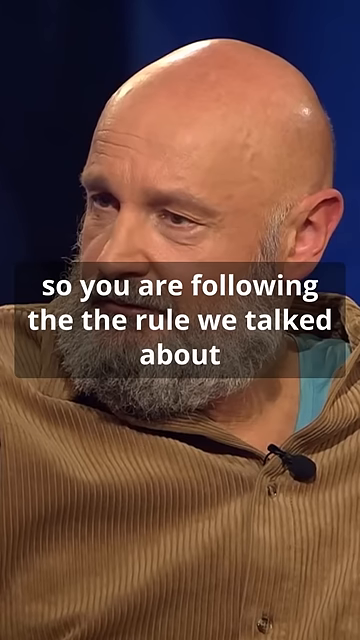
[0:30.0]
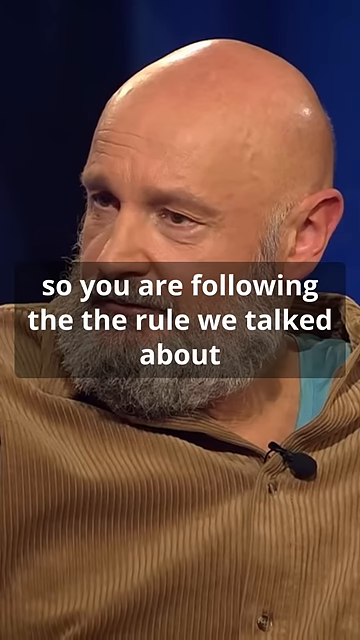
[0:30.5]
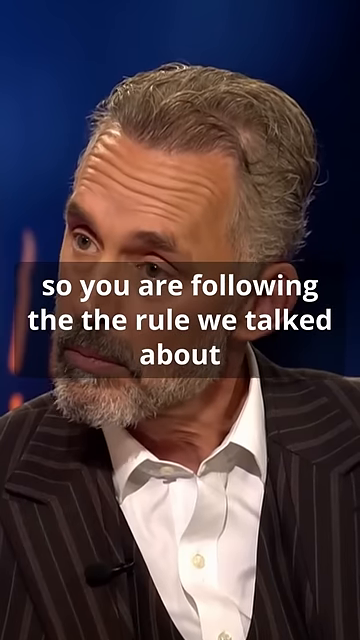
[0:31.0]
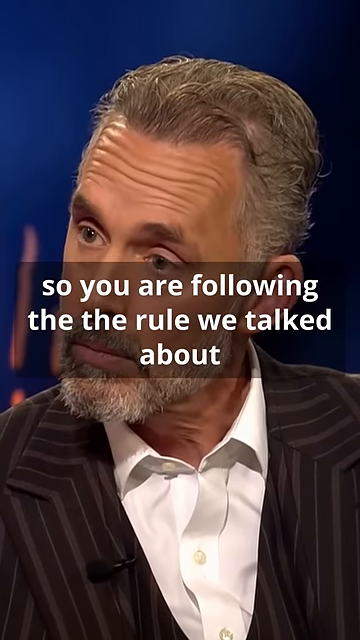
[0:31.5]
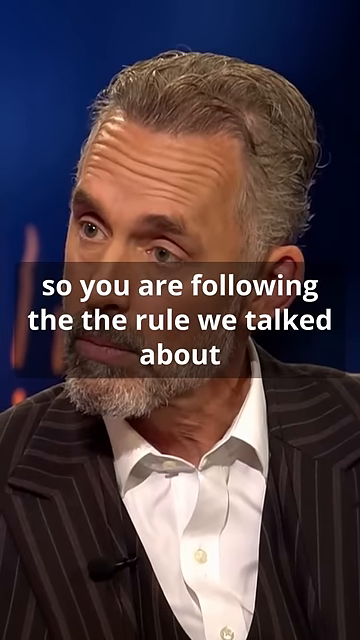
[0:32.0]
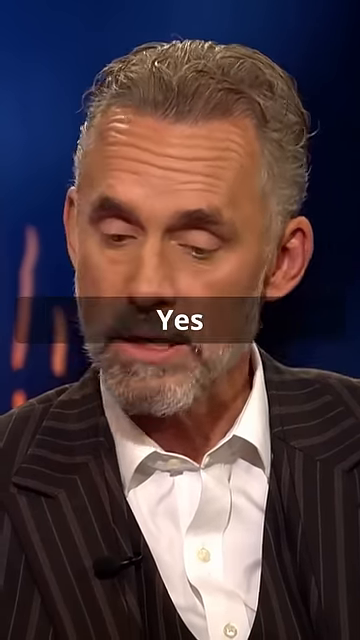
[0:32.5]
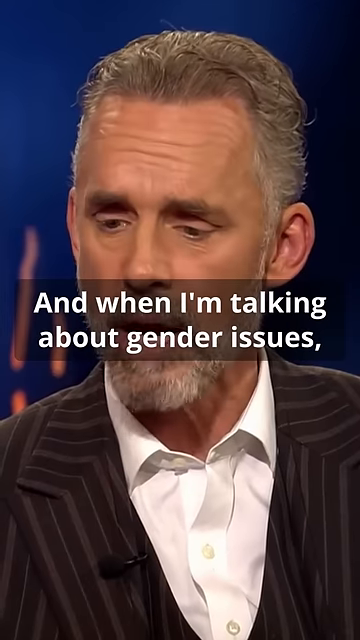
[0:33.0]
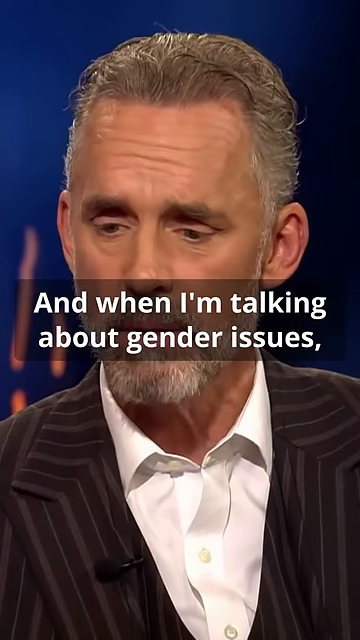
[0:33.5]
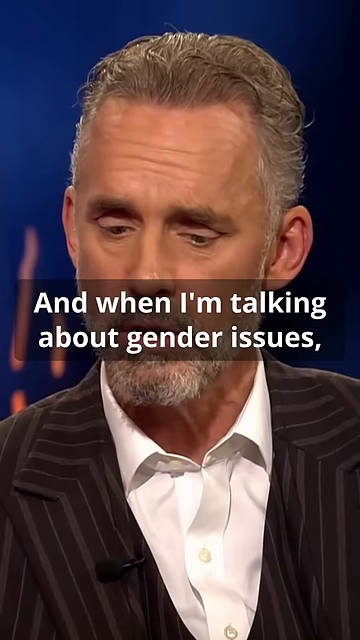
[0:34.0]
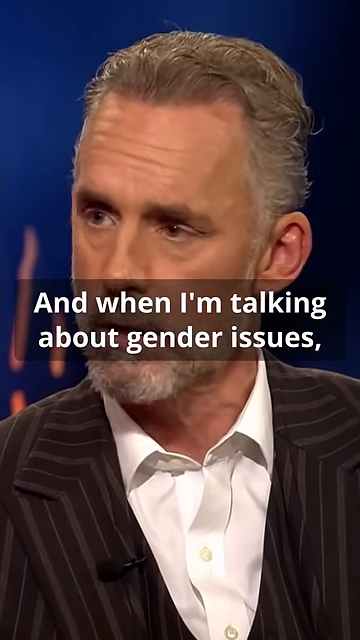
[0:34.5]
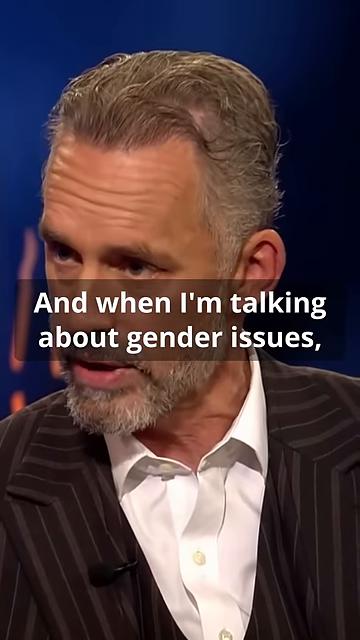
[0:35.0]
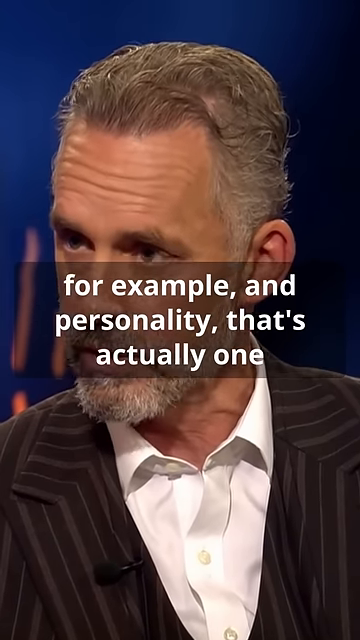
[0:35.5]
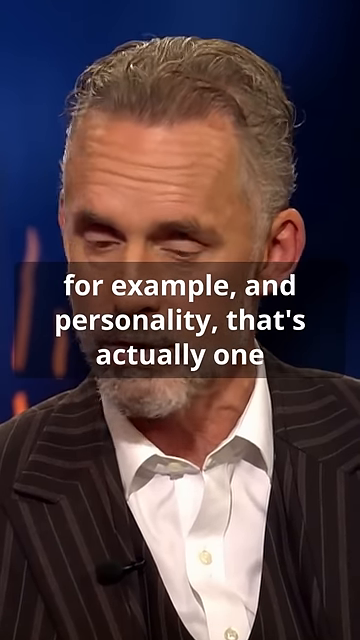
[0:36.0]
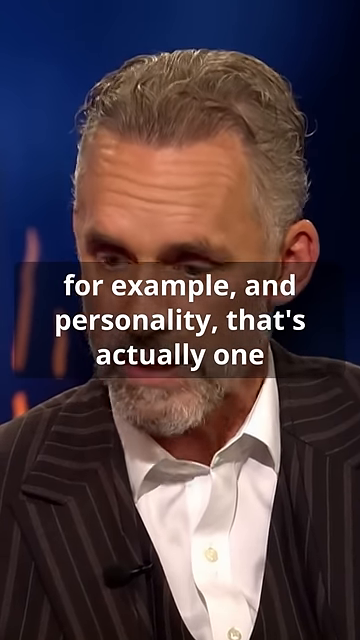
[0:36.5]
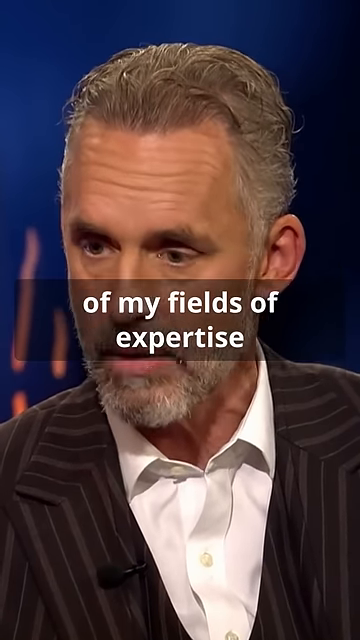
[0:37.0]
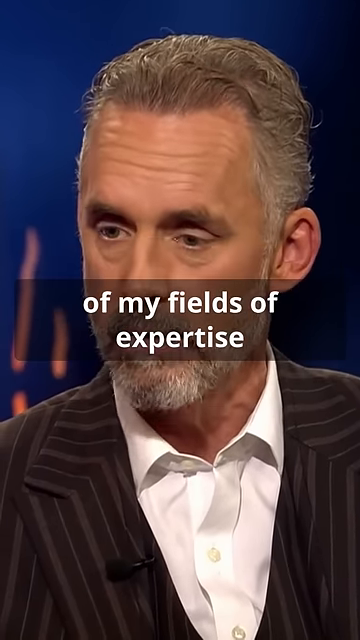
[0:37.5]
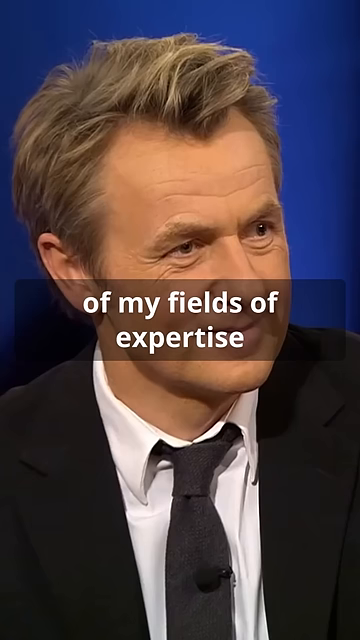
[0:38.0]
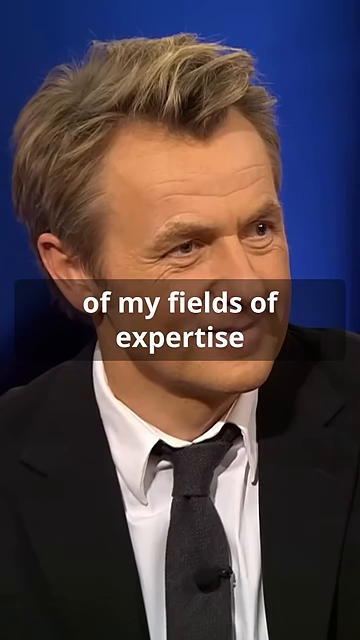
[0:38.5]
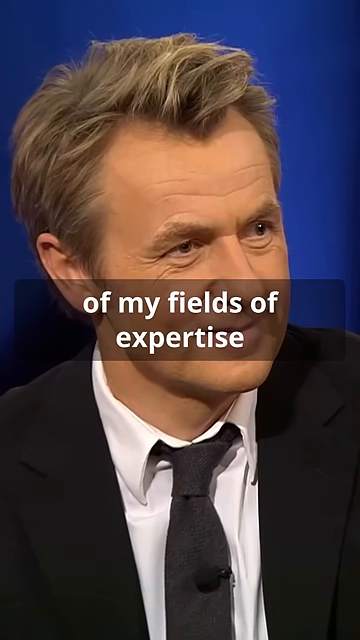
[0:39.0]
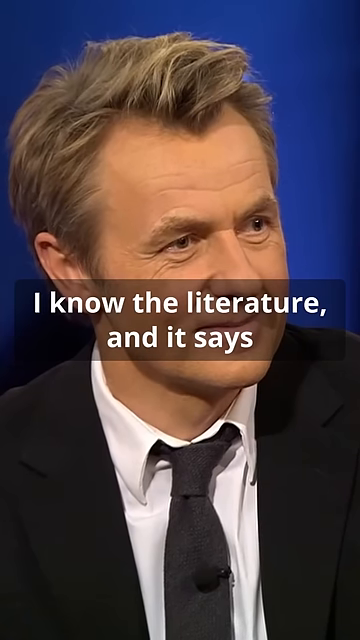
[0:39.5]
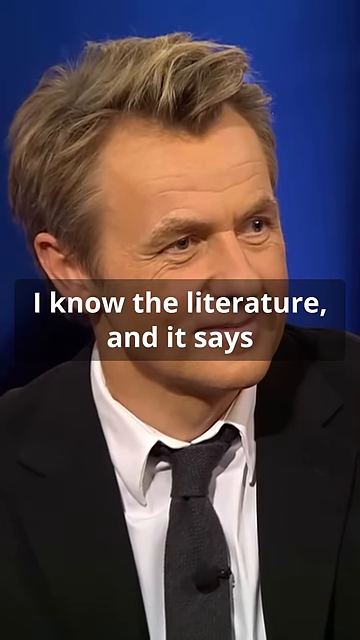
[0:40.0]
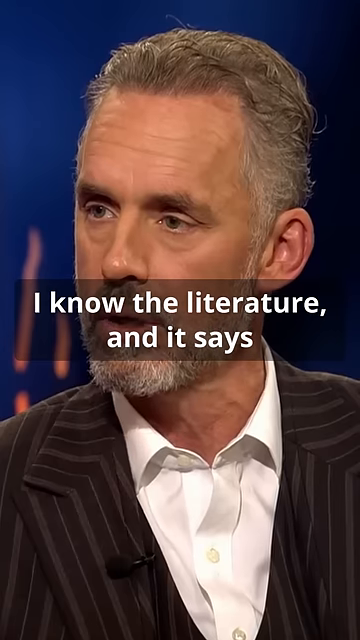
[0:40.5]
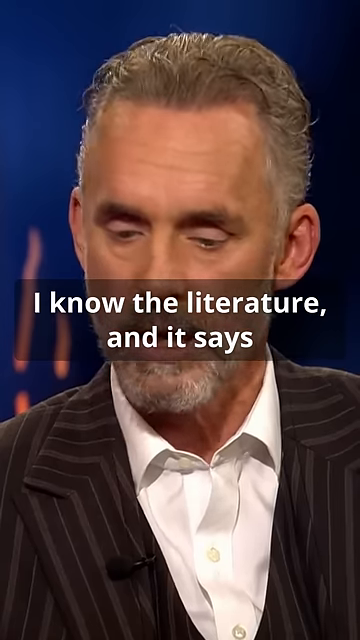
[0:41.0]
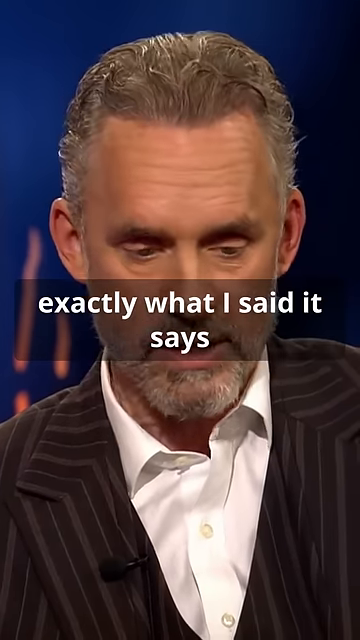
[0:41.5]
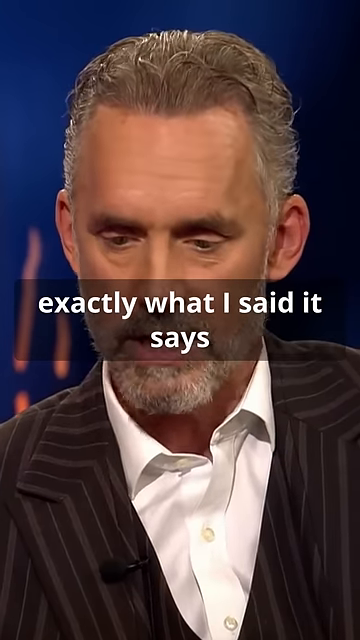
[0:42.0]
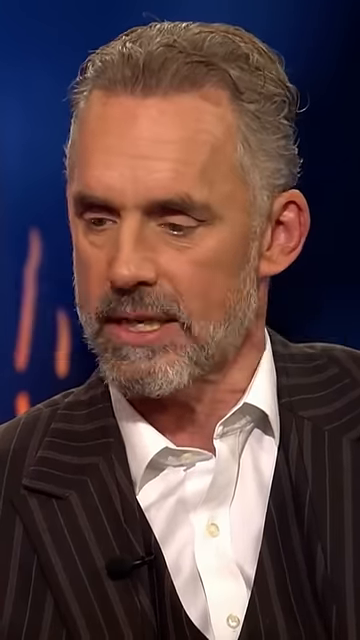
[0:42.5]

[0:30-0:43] The video continues on the bald man in the brown shirt as the captions read "so you are following the rule we talked about". The camera switches to Jordan Peterson, who has a contemplative expression and says, "yes, and when I'm talking about gender issues, for example, and personality, that's actually one." The camera switches back to the interviewer in the black suit and black tie as the text continues "of my fields of expertise, I know the literature", and then back to Peterson. It looks like an interview with Peterson with several other people apparently present, and the camera switches back and forth between Peterson, the interviewer, and other people sitting around the panel.